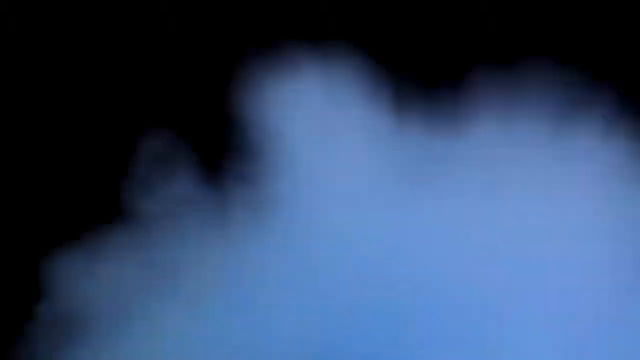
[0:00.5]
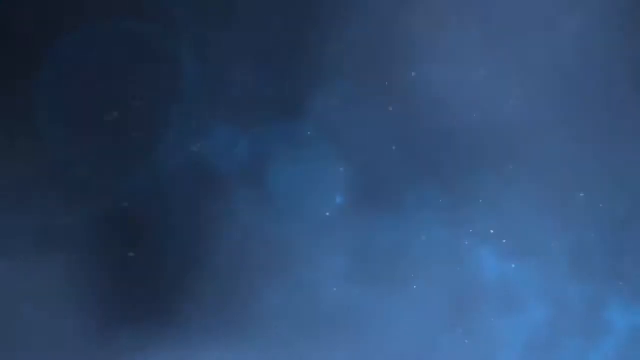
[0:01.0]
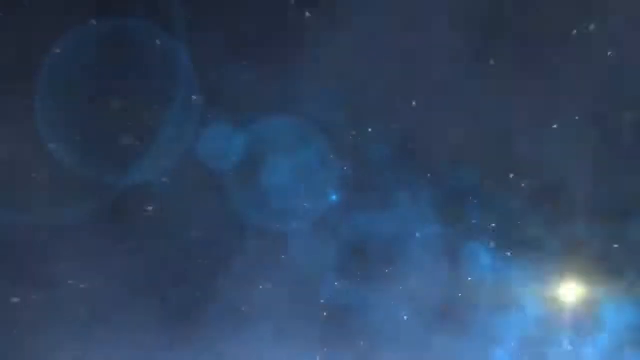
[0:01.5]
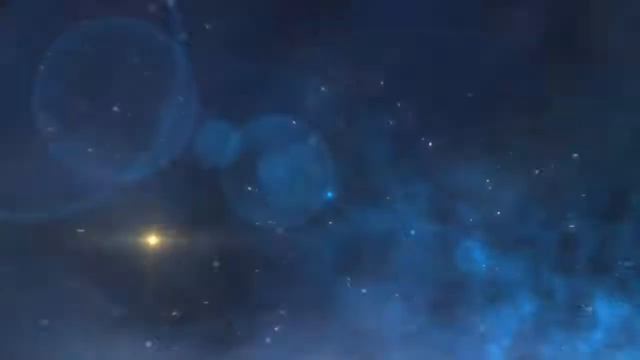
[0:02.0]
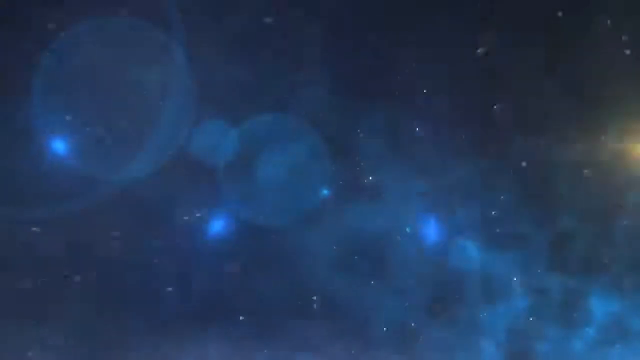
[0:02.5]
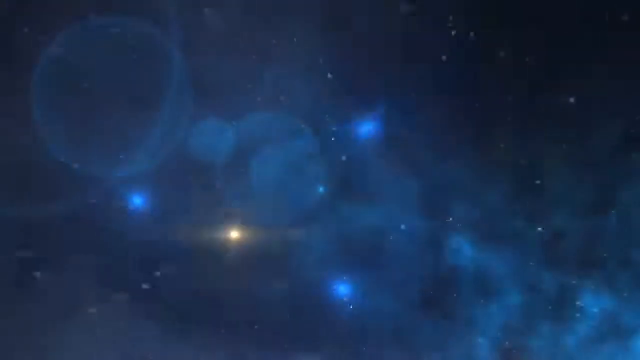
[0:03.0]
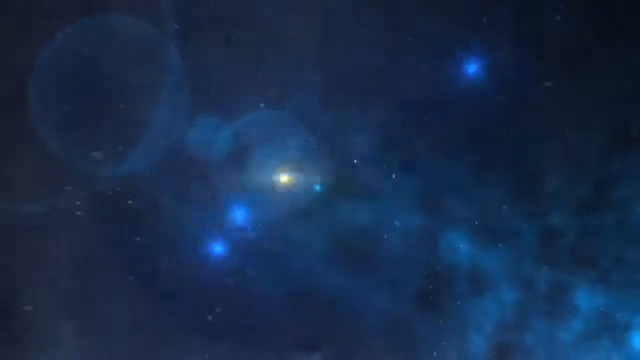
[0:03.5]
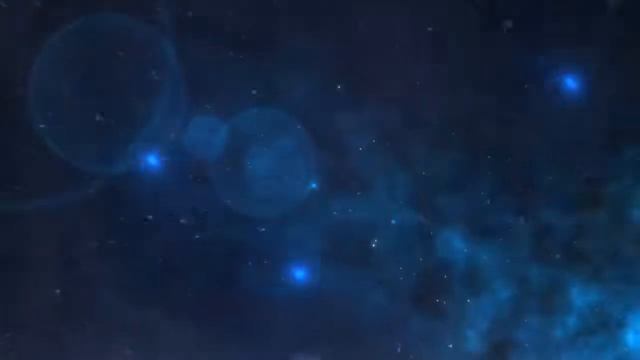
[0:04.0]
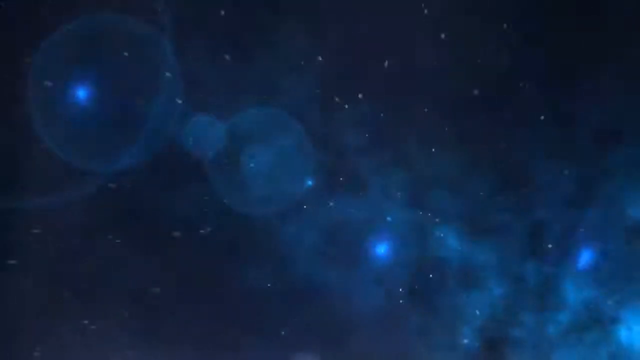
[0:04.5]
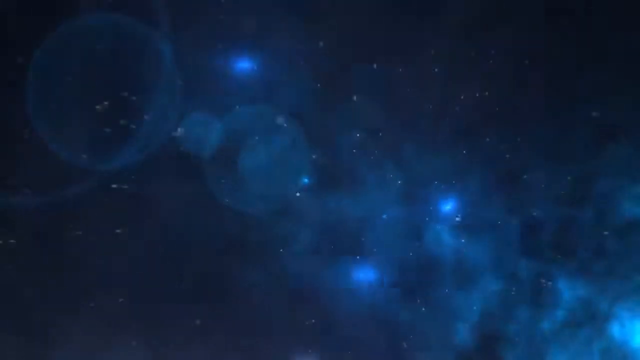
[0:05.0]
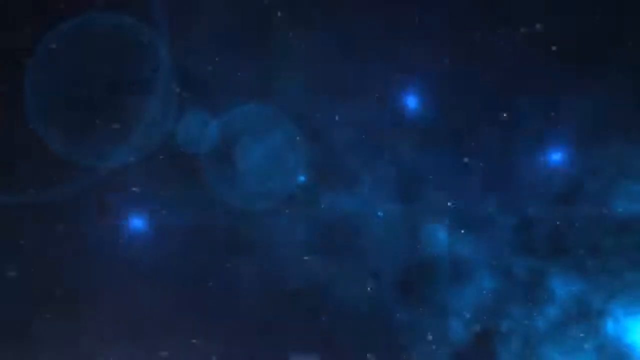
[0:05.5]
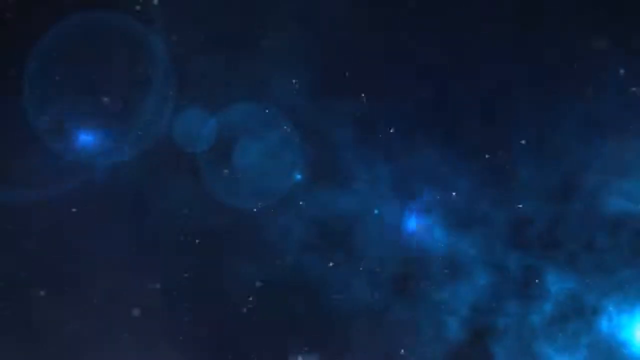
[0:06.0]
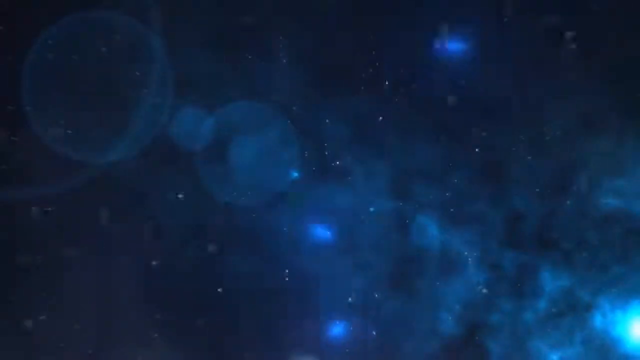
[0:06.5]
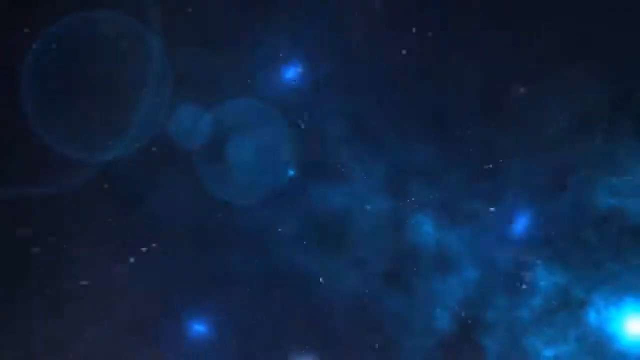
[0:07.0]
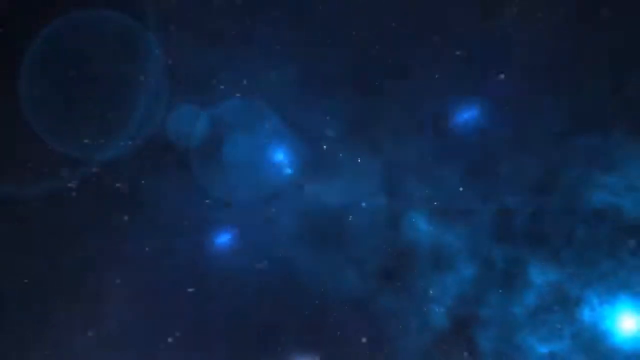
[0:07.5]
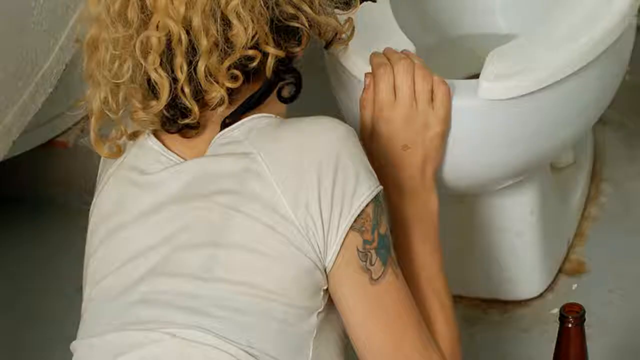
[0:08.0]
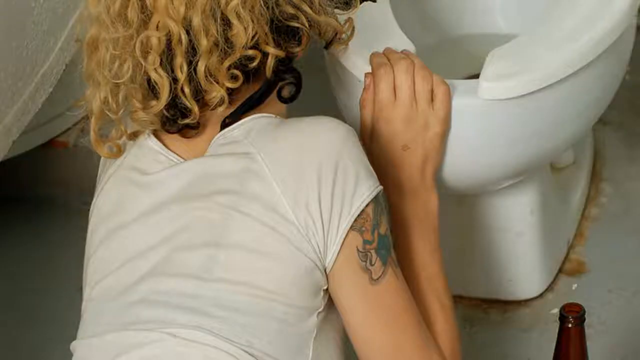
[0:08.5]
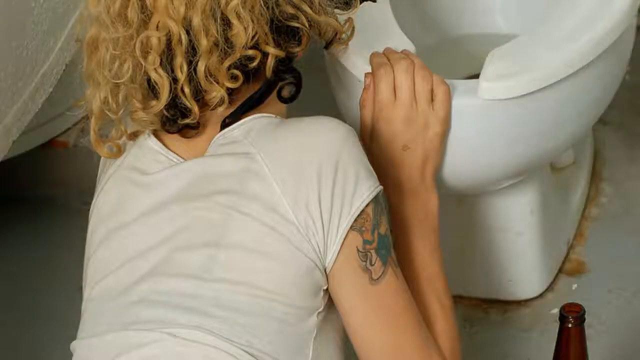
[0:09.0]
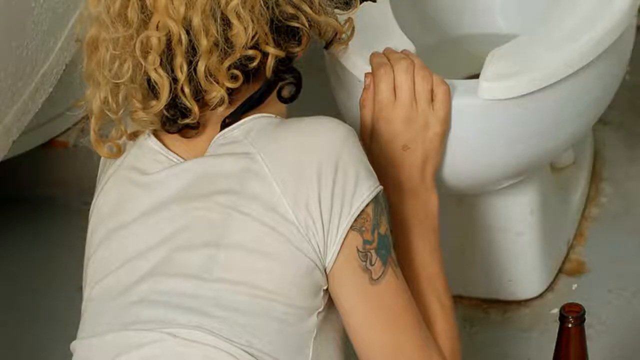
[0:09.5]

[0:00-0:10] The video opens with computer-generated footage of several clouds and stars gliding through space. It then pans out to a picture of a woman with blonde hair, wearing a white shirt, with a tattoo on her right arm. She is leaning over to the side of a white toilet, and beside her is what looks to be a beer bottle. The picture appears to be taken indoors with a good amount of artificial light. The shot ends on the picture of her holding onto the toilet.